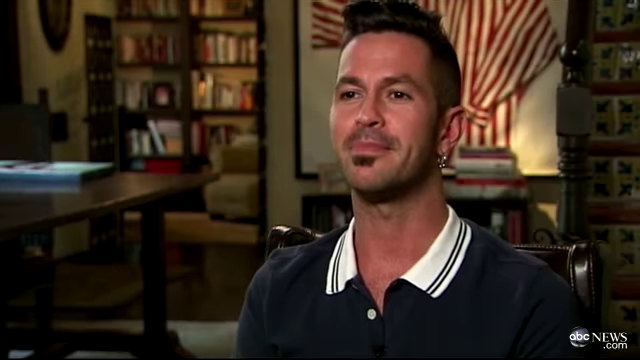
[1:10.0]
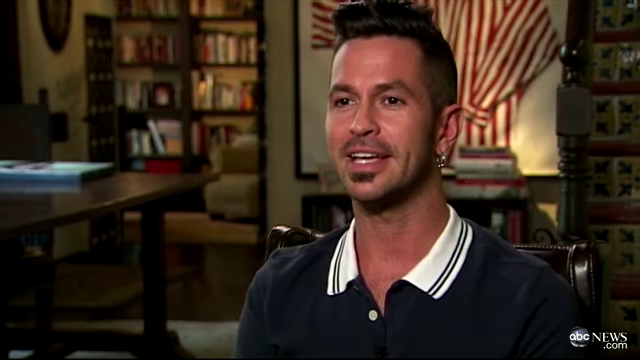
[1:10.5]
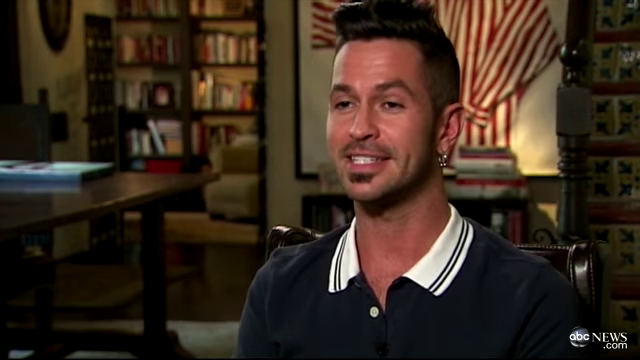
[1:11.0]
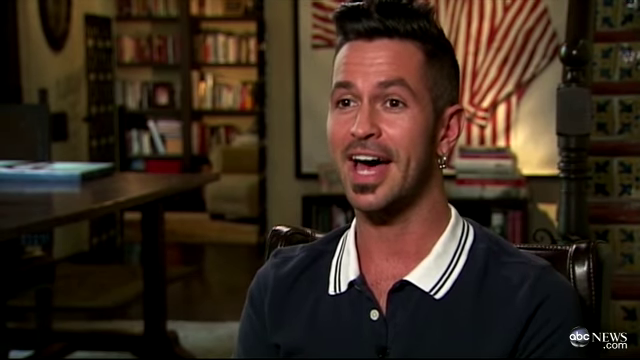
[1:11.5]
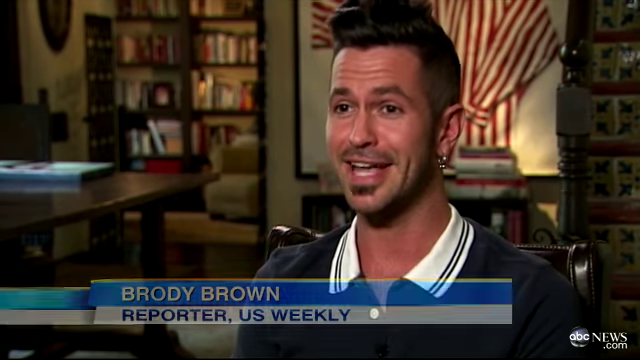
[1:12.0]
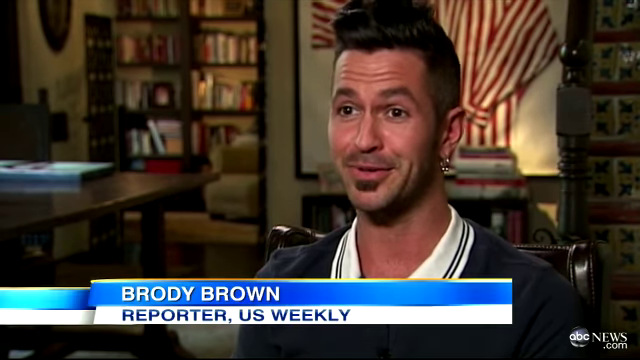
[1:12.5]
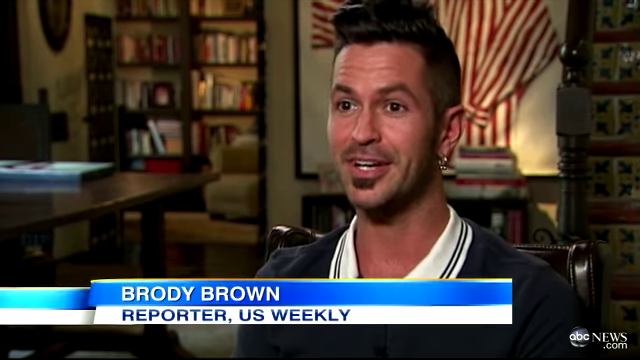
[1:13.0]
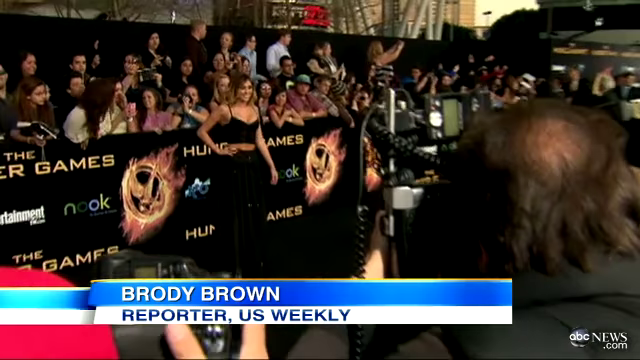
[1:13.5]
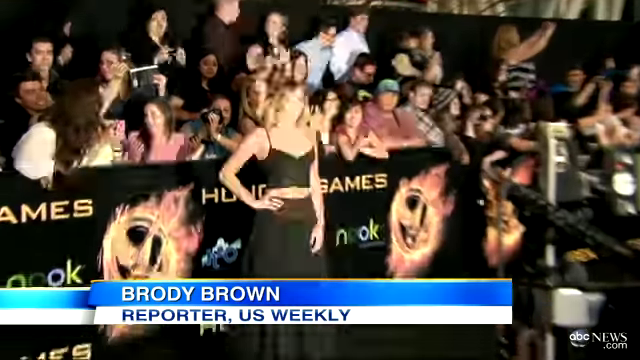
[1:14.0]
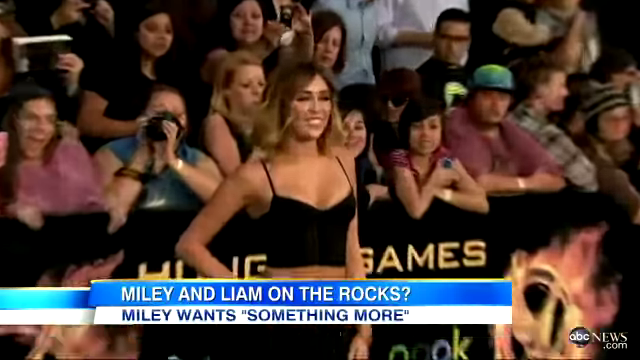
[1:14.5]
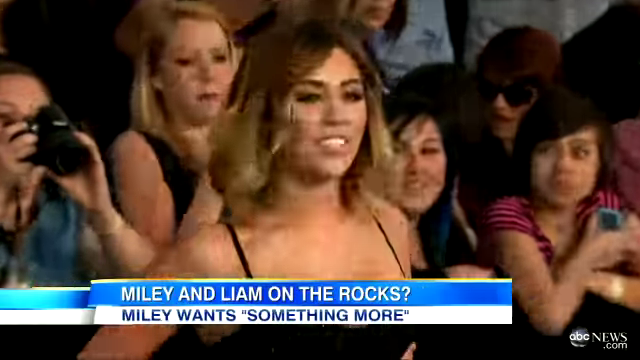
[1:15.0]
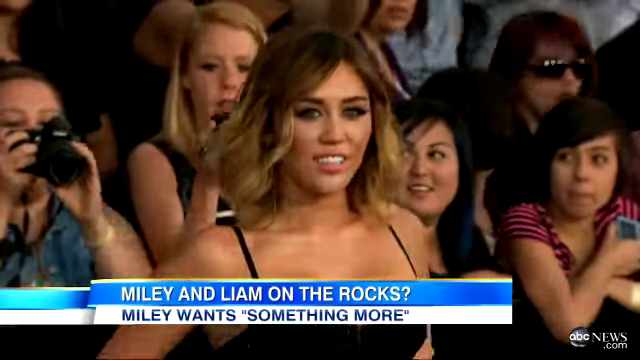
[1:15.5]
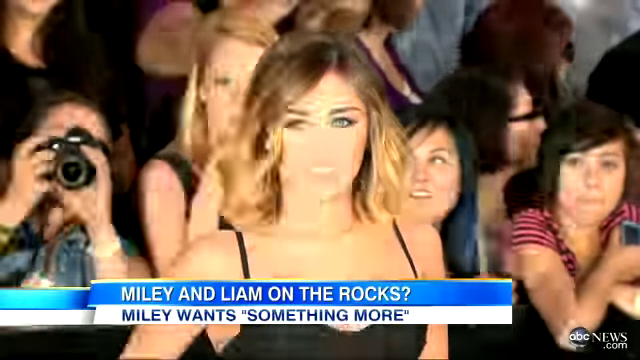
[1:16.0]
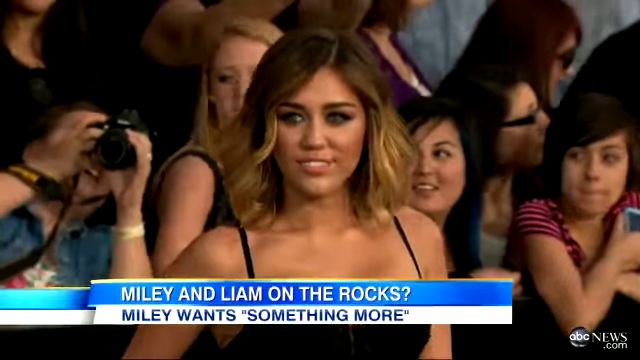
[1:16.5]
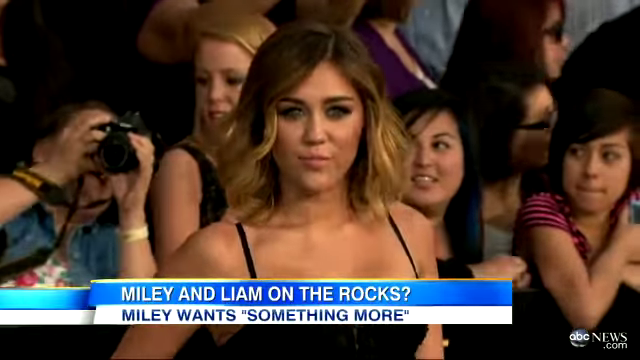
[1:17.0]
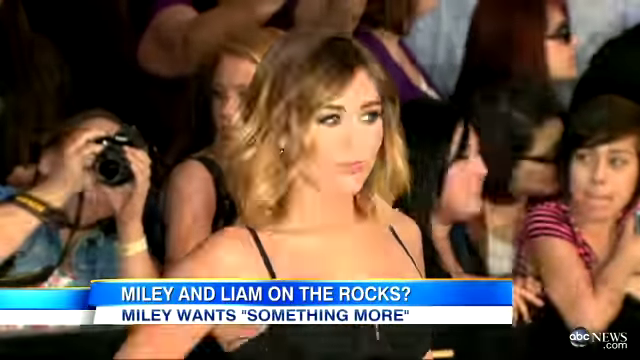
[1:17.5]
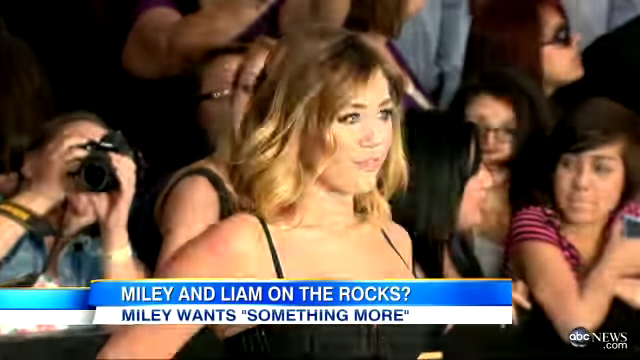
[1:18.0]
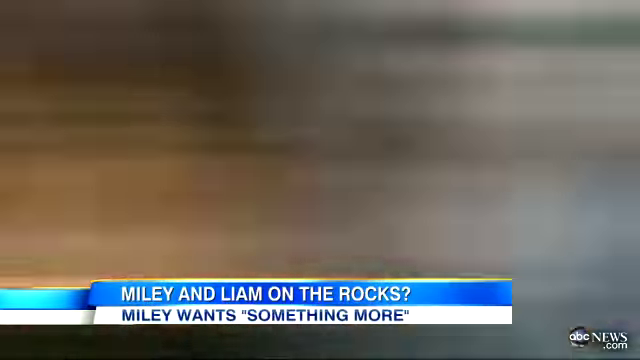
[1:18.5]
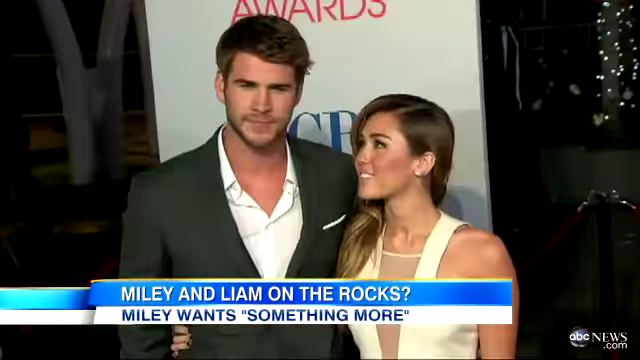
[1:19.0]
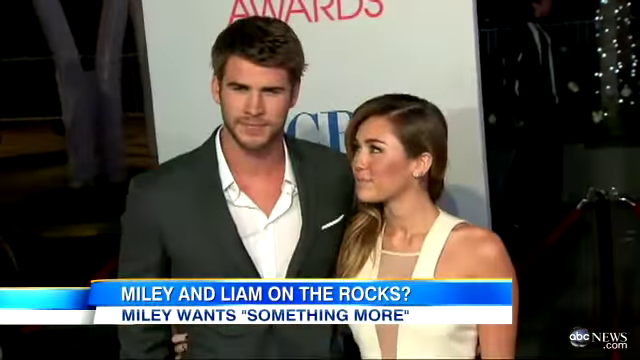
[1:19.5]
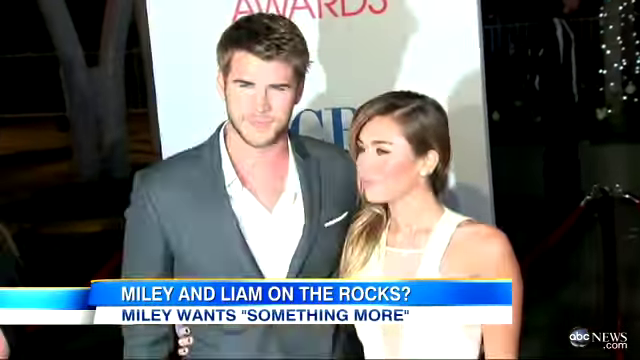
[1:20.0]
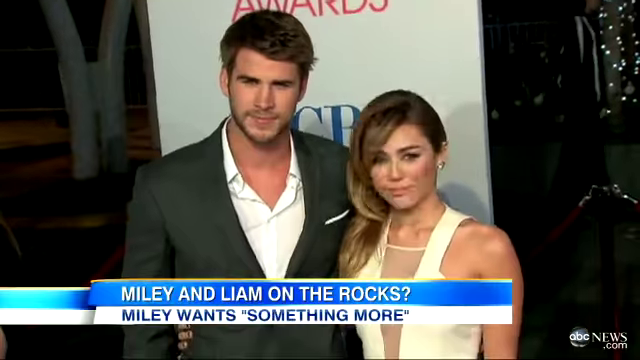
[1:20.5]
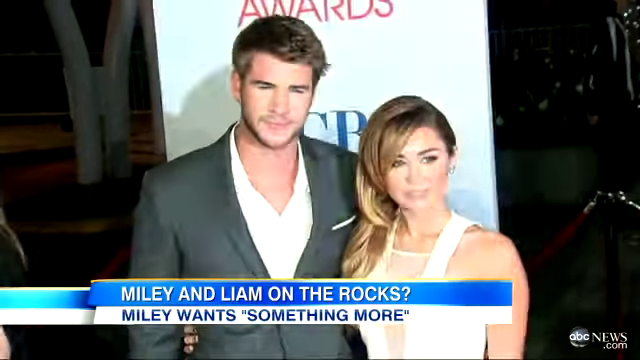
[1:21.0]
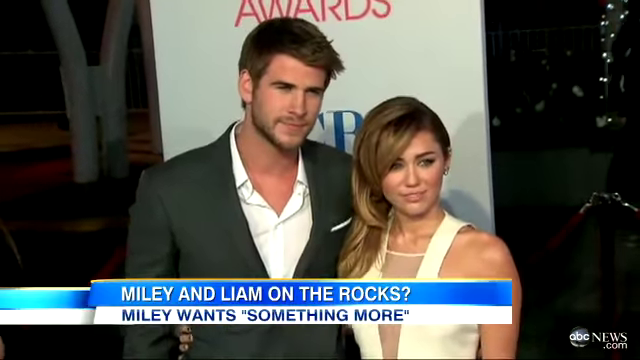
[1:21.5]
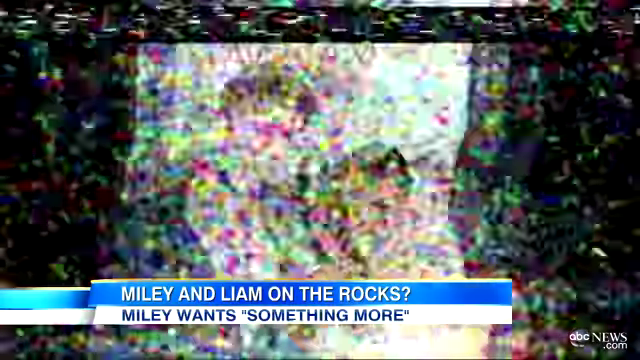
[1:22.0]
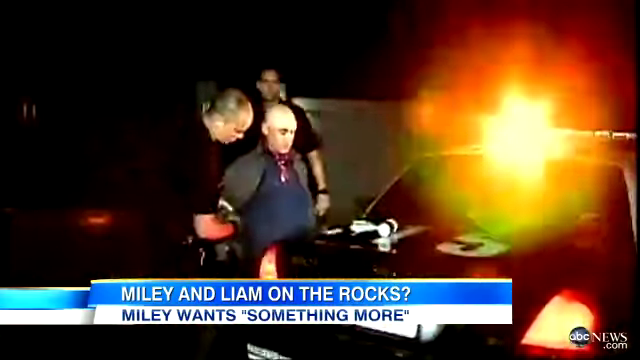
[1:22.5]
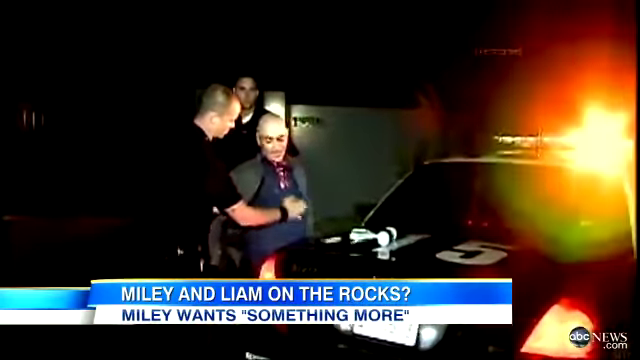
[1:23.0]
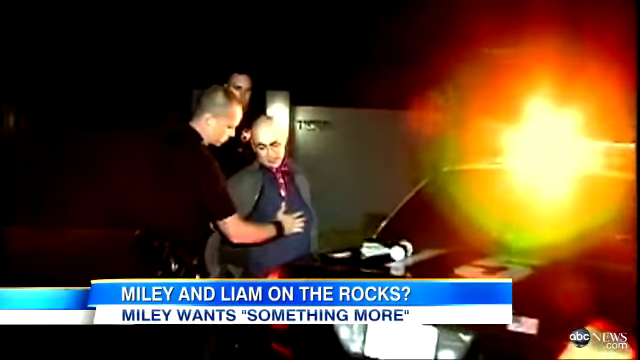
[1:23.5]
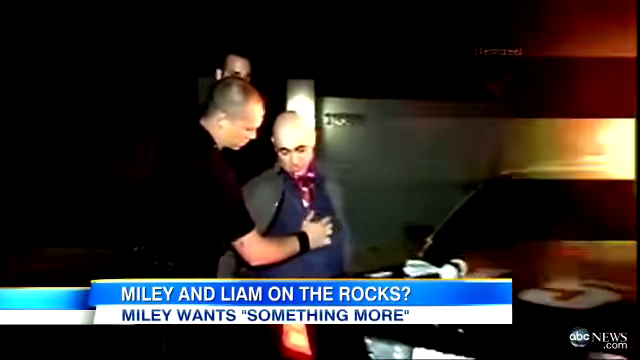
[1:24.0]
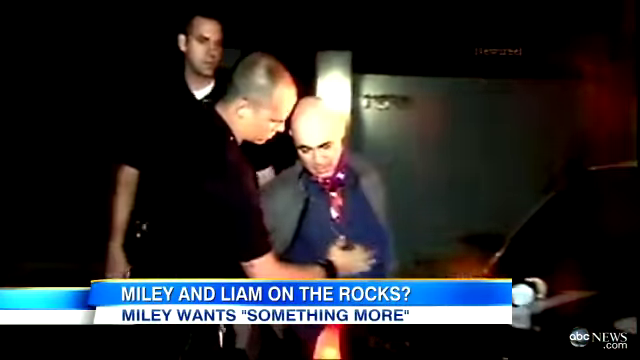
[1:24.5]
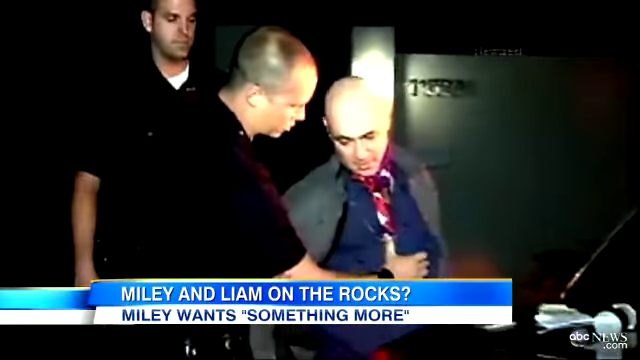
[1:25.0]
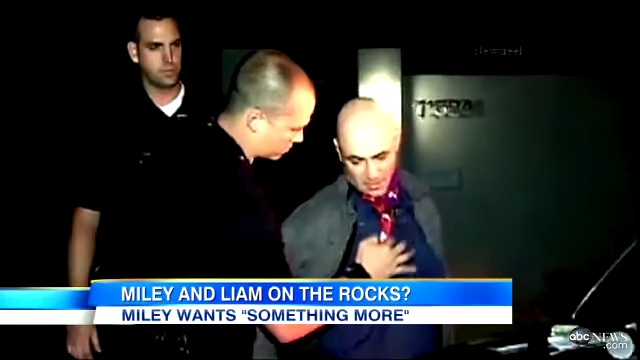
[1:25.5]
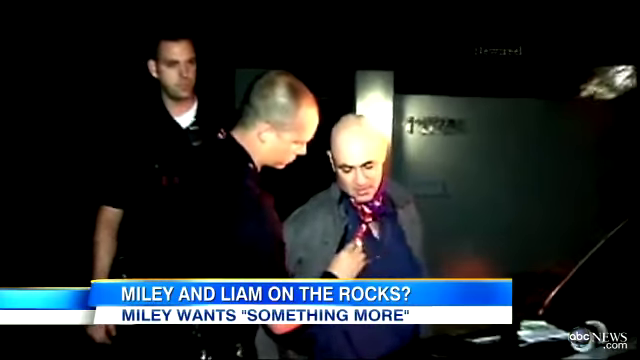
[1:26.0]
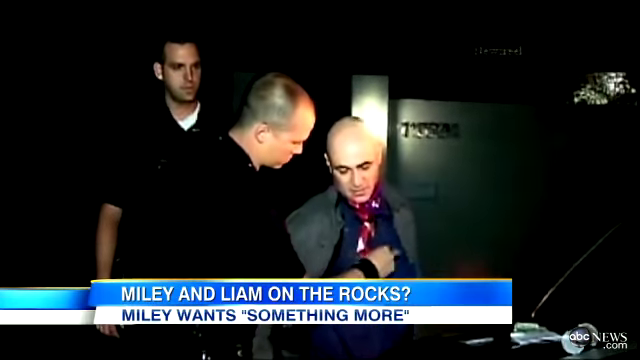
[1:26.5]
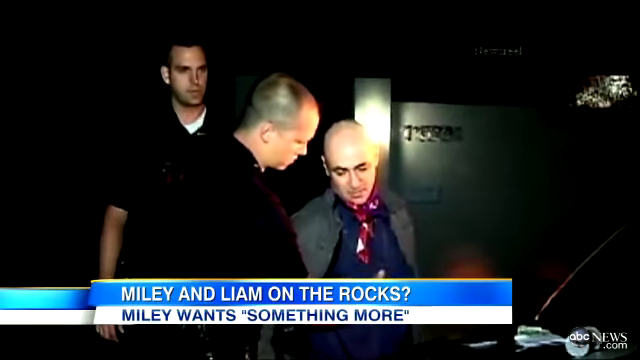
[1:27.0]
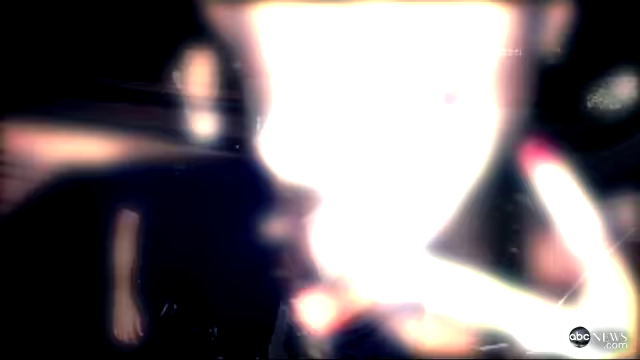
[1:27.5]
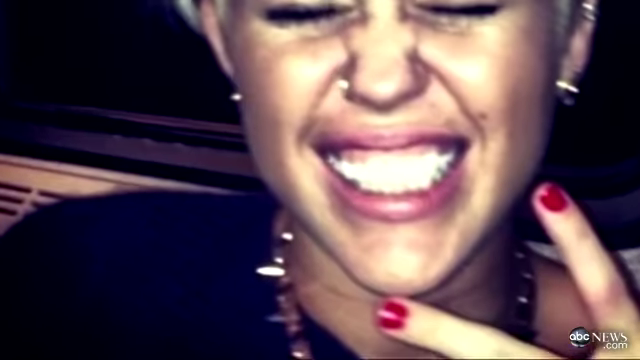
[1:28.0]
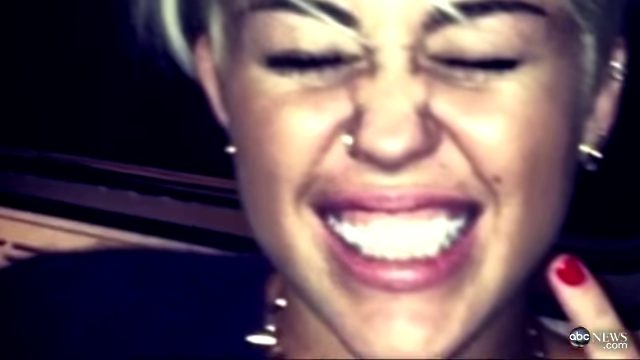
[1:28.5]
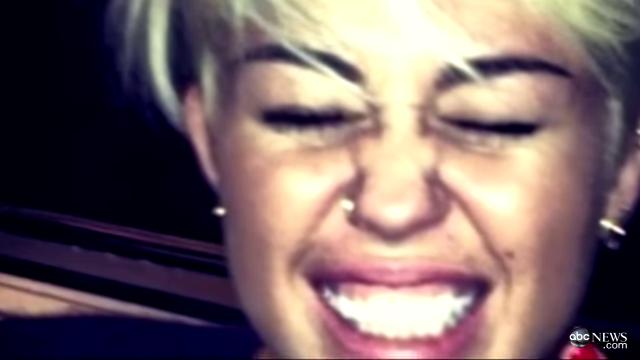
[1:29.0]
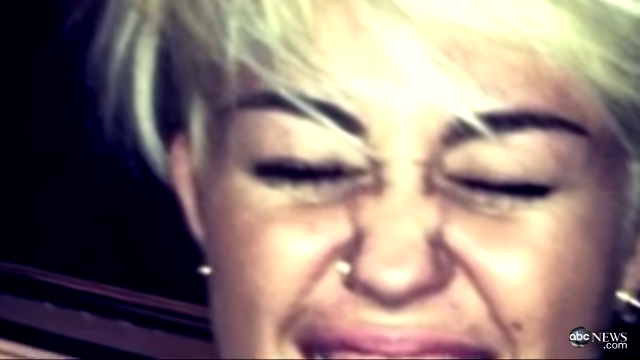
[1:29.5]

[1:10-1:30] A man who is probably Brody Brown, a reporter from US Weekly, appears. A picture of Miley Cyrus is shown with the caption "Miley and Liam on the rocks. Miley wants something more." Someone is shown being arrested by their car. Miley then appears with really short brown hair, and in a crowd where she is being photographed. She and her husband are shown at an awards ceremony. Two policemen arrest a bald man wearing a blue shirt and a red tie. Finally Miley is shown with really short blonde hair.